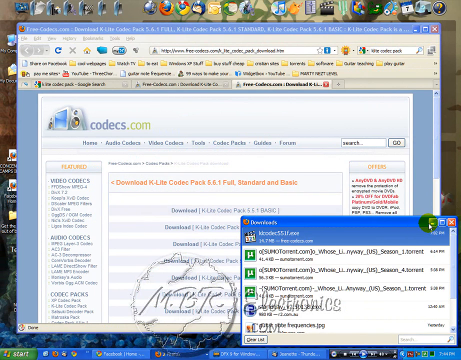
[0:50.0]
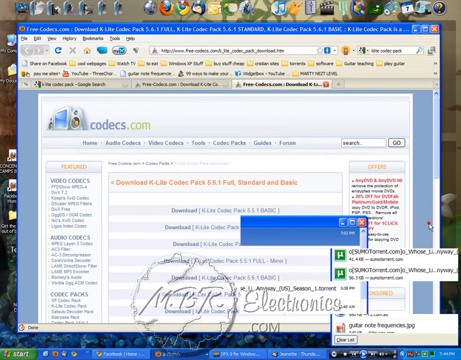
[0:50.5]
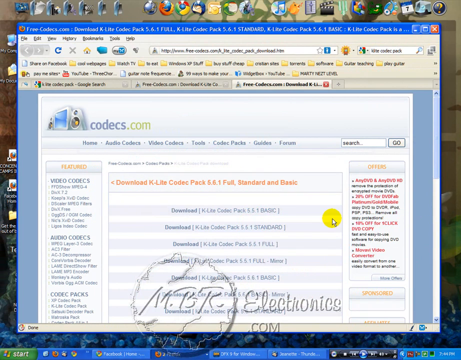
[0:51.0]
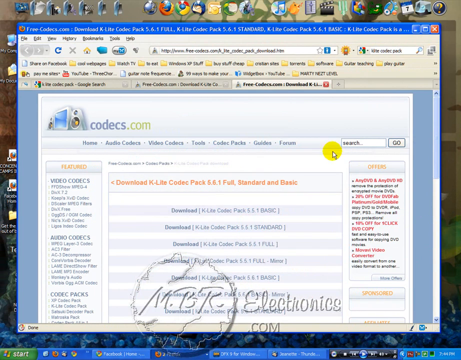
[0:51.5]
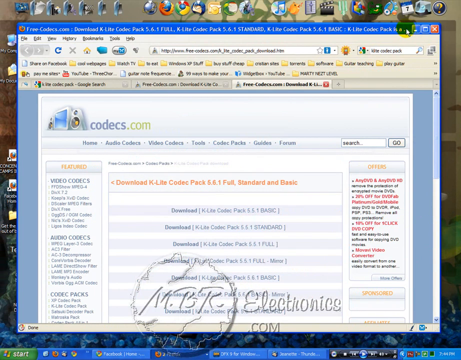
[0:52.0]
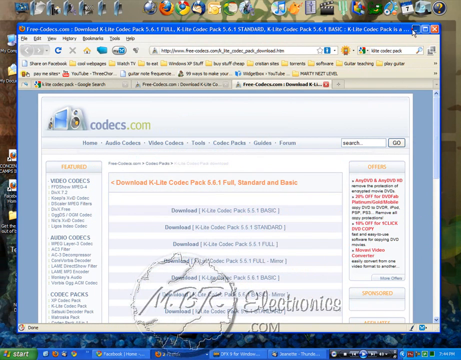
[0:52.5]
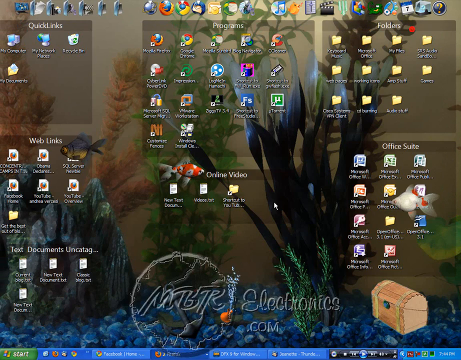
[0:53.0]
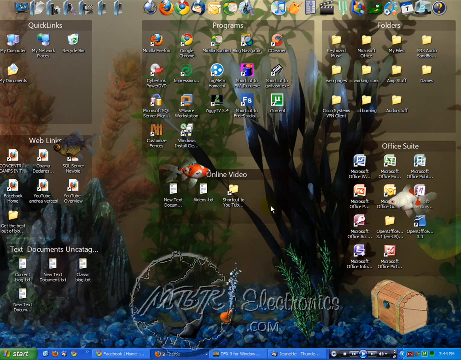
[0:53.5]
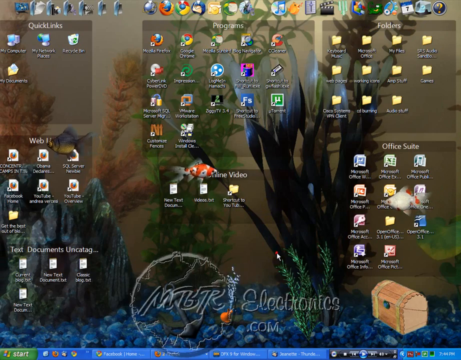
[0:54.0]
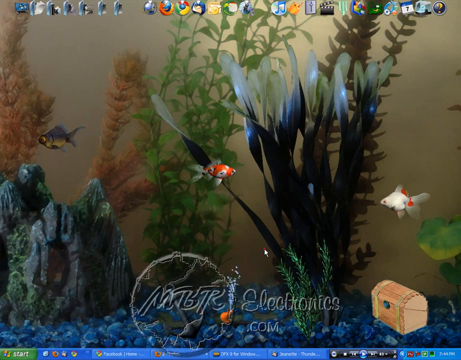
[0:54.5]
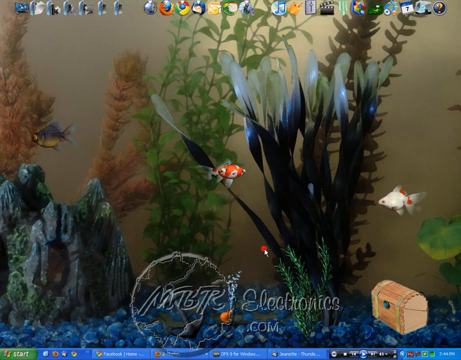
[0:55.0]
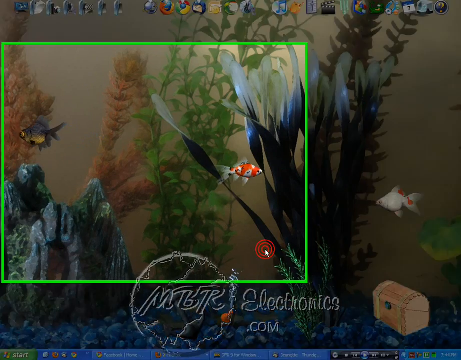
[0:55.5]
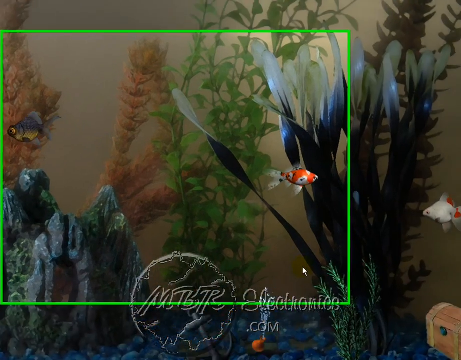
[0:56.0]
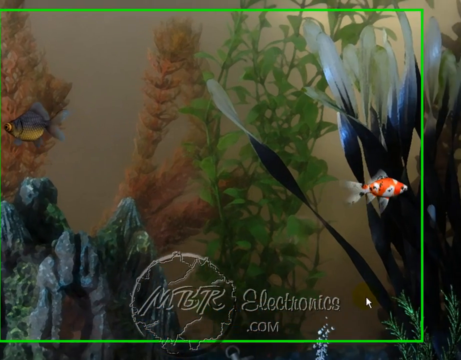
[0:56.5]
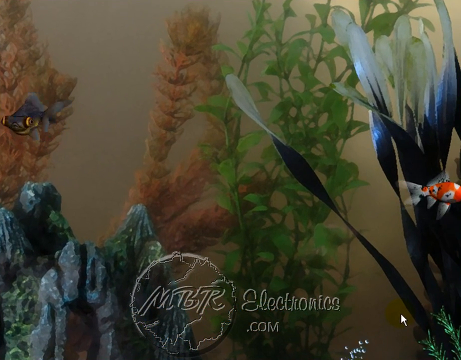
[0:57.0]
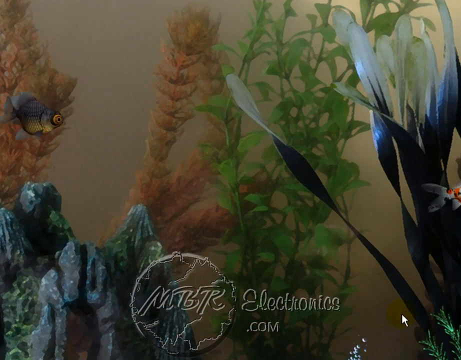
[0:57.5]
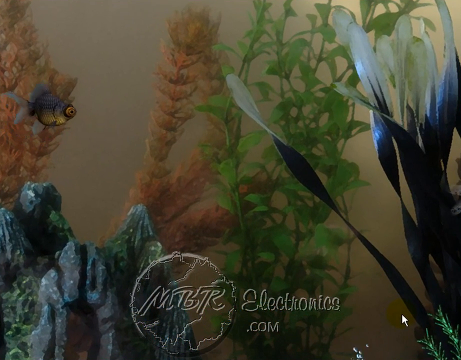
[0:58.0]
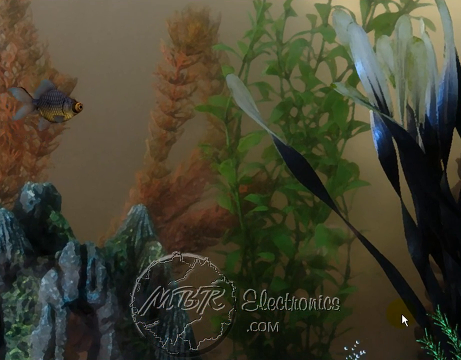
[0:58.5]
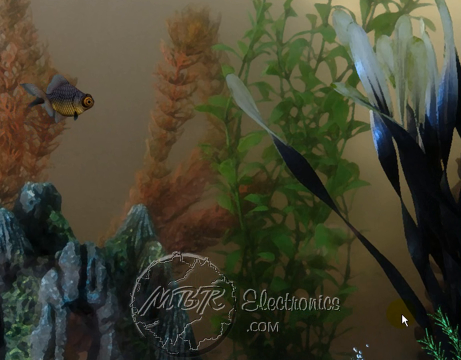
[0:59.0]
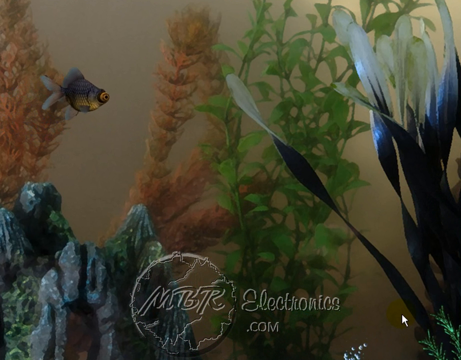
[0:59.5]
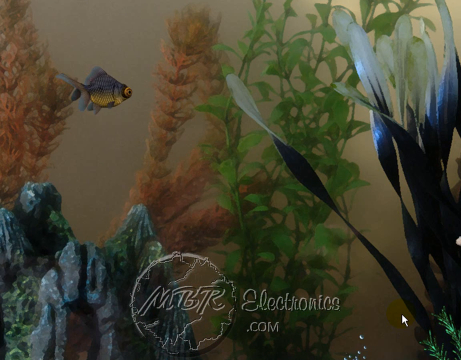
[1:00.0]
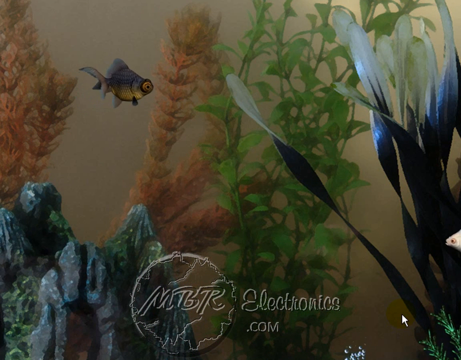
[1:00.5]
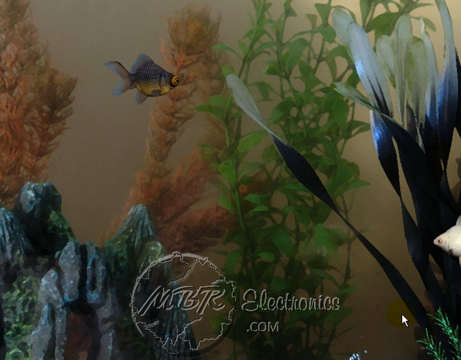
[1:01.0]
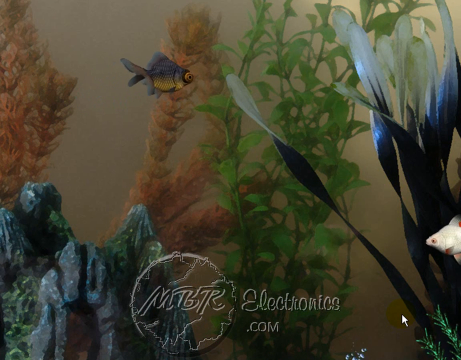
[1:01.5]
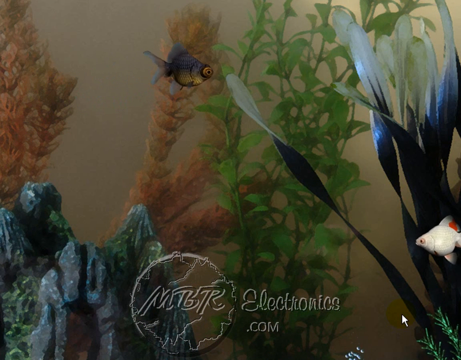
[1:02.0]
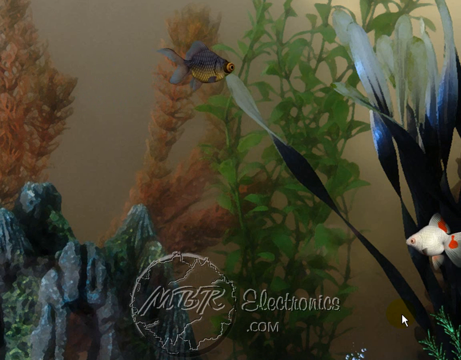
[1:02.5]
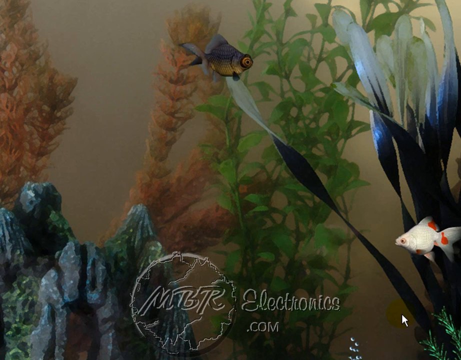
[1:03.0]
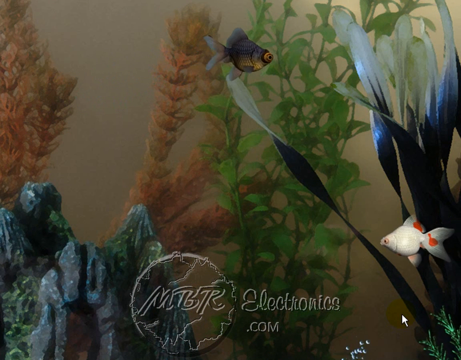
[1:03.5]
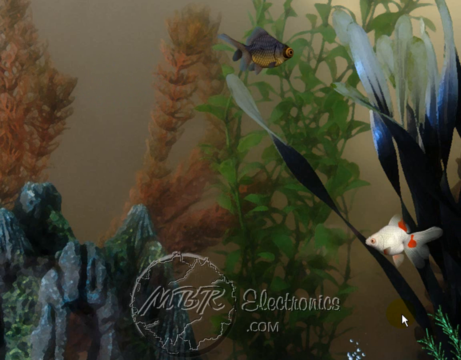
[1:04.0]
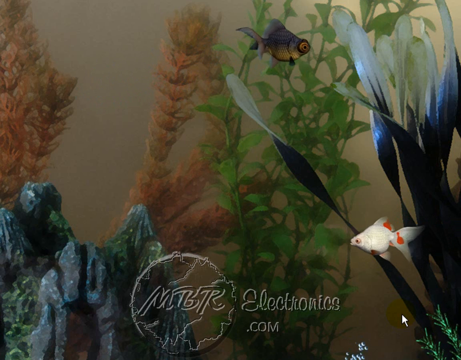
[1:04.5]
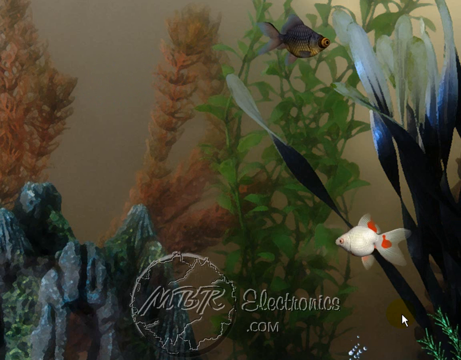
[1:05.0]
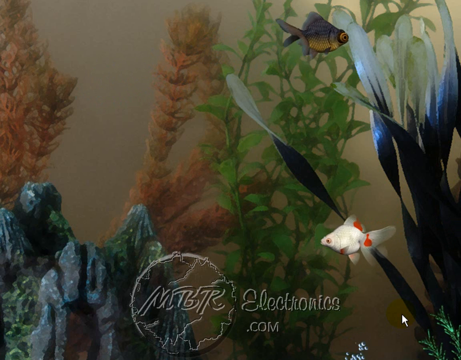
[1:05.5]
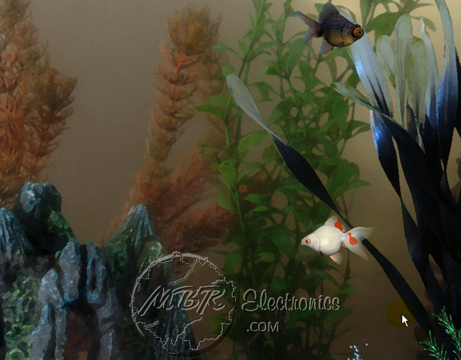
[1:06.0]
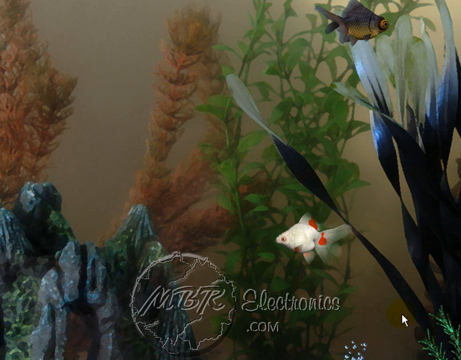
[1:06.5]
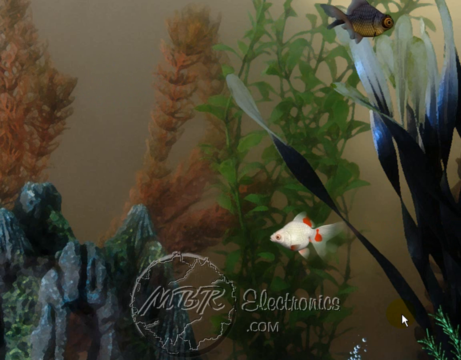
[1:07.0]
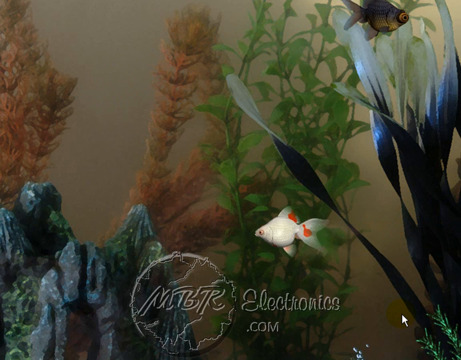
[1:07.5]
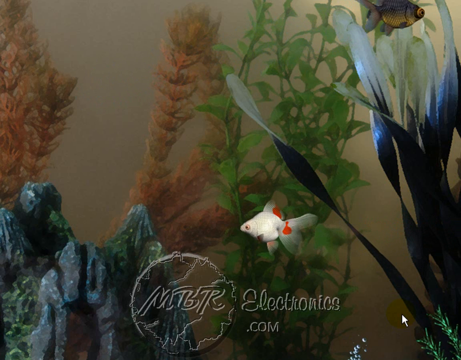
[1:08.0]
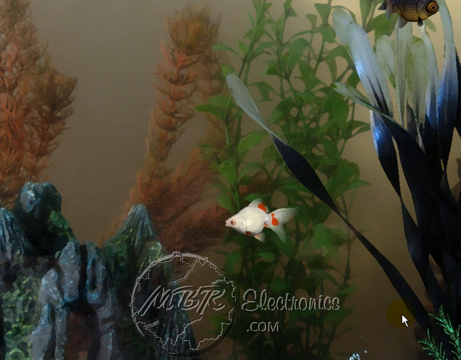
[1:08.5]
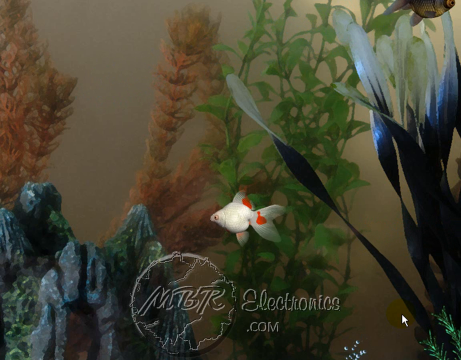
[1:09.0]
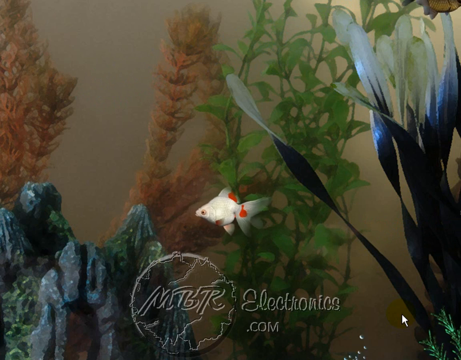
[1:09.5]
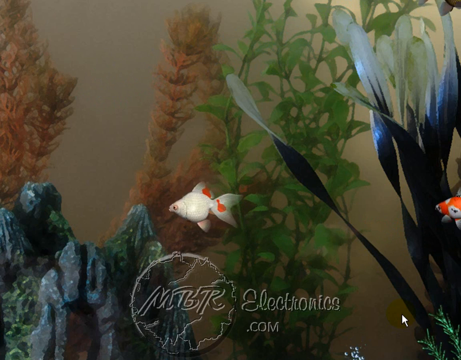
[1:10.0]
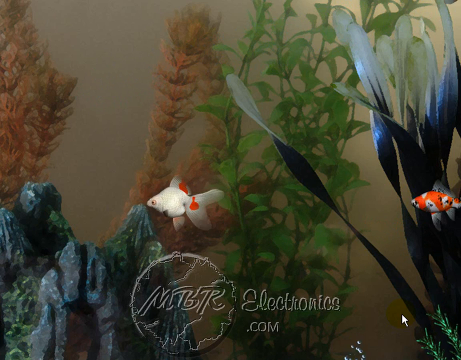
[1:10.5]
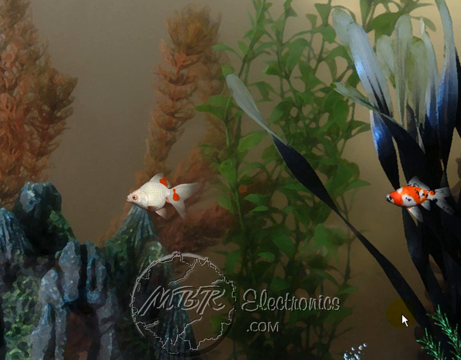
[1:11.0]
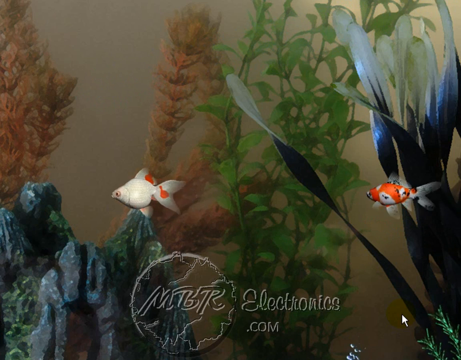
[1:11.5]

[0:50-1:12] In Firefox, "klitecodexpack5.6.1 full" is typed into the search engine and searched. The first link that appears is clicked, and an option saying "download klightcodex" appears and is clicked. At the top, "freecodex.com download" is visible; here the codec is chosen, and the 5.5.1 full codec is clicked. Next the k lite code is clicked, followed by OK, then Run, then Yes, completing the process.